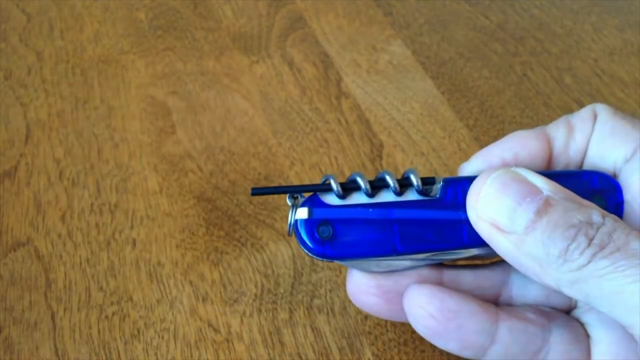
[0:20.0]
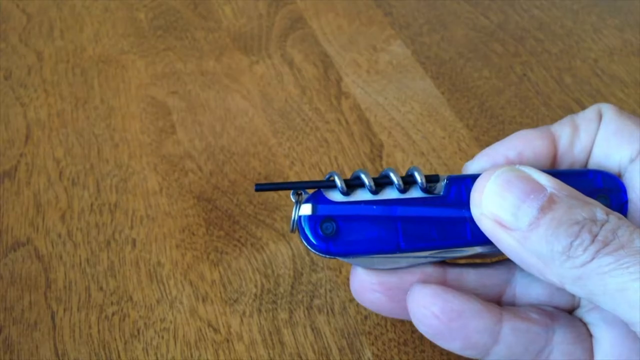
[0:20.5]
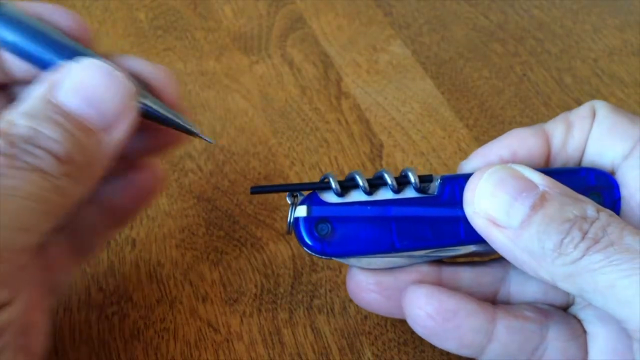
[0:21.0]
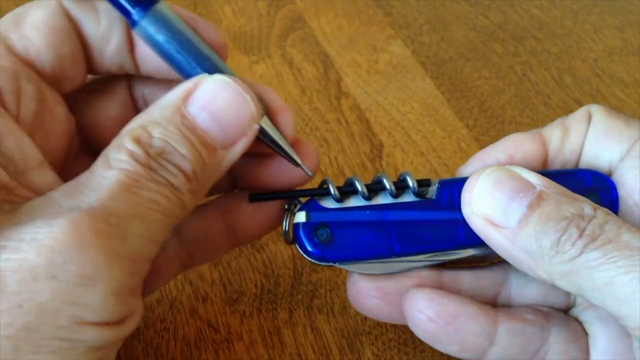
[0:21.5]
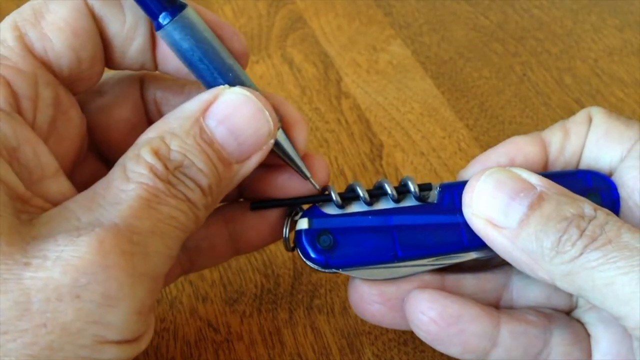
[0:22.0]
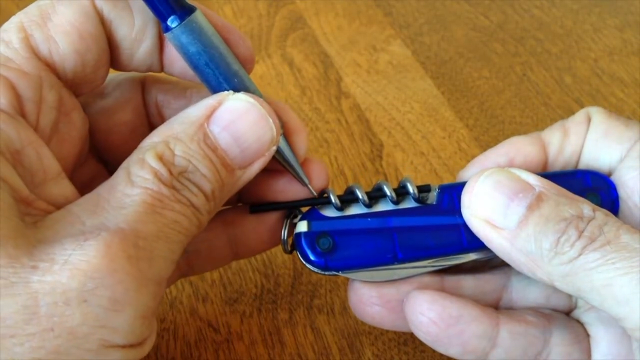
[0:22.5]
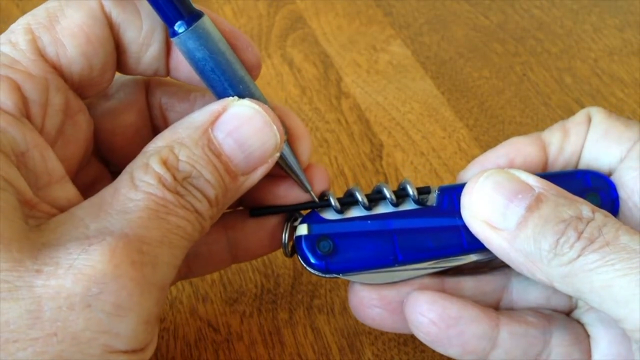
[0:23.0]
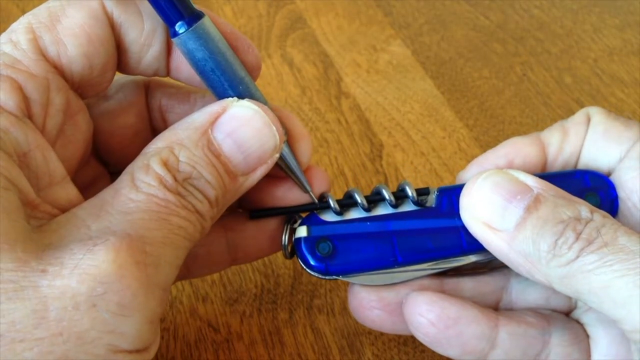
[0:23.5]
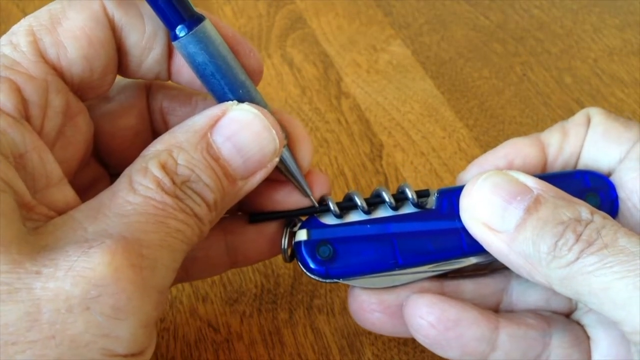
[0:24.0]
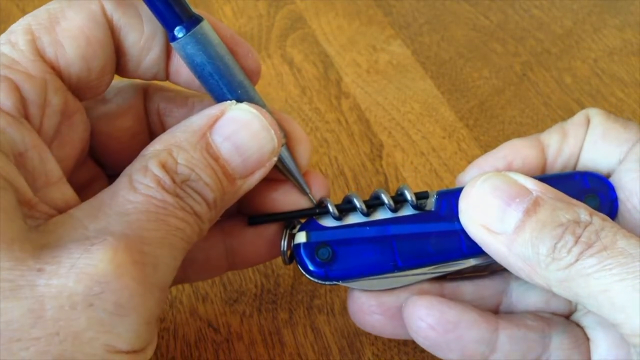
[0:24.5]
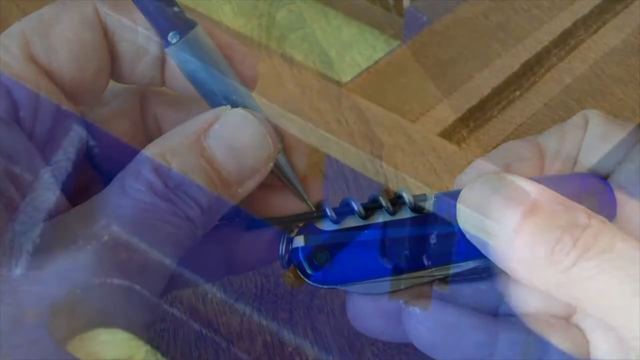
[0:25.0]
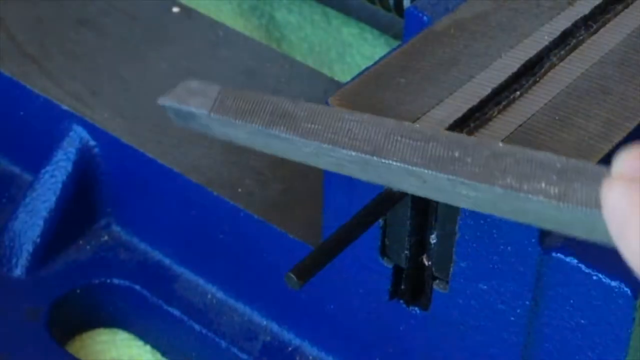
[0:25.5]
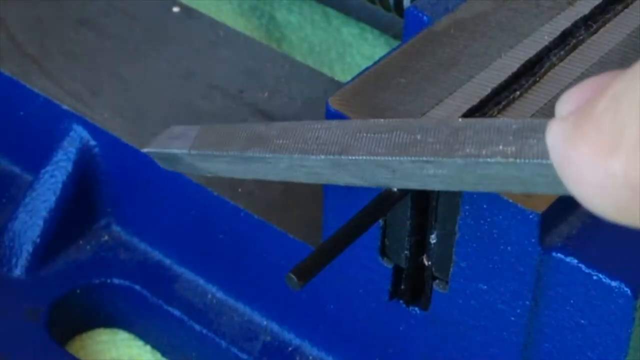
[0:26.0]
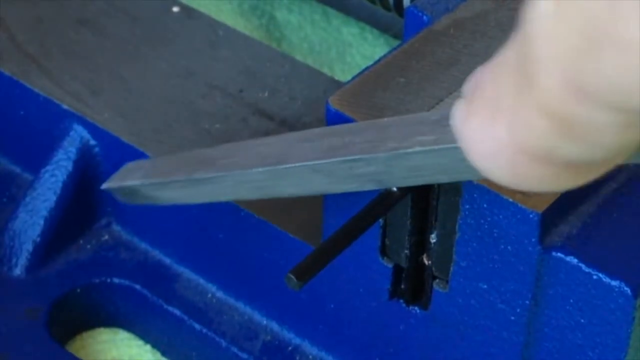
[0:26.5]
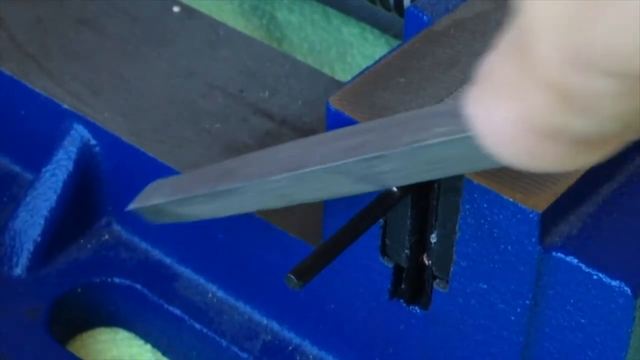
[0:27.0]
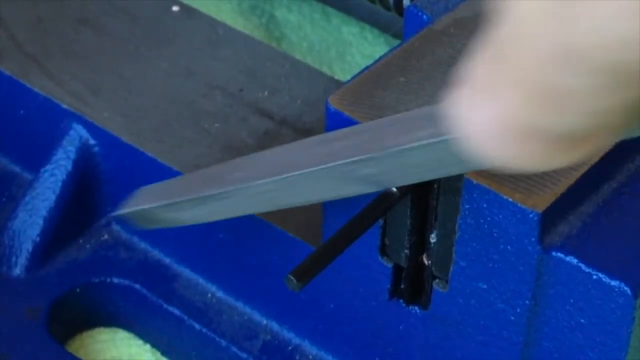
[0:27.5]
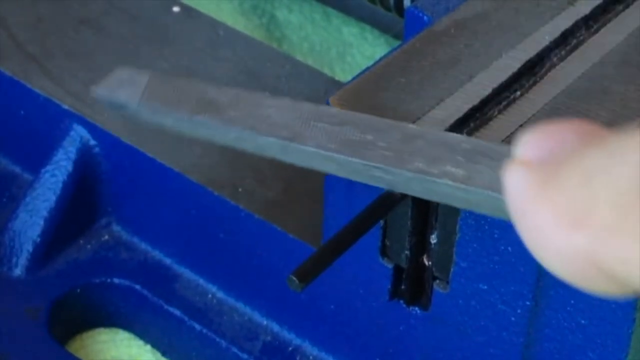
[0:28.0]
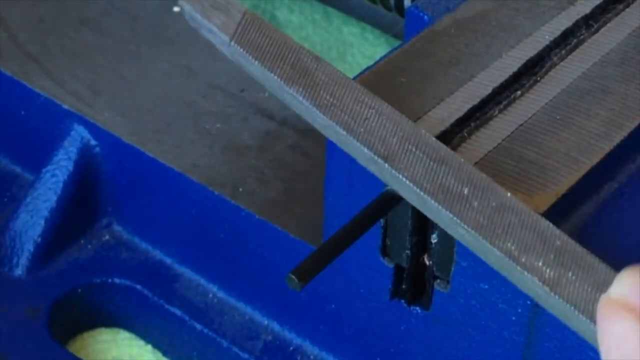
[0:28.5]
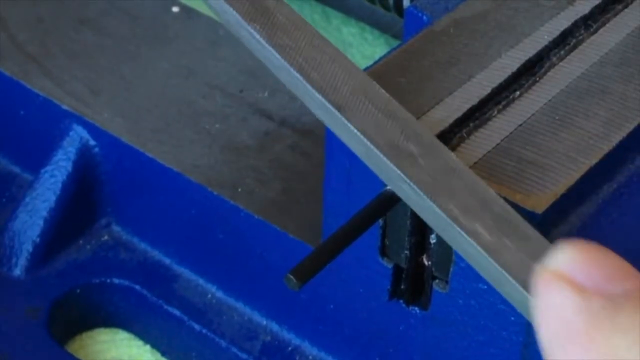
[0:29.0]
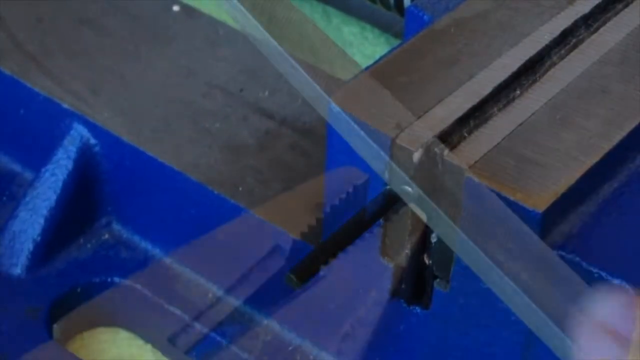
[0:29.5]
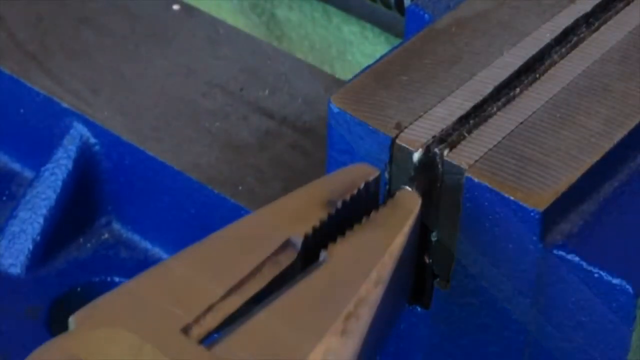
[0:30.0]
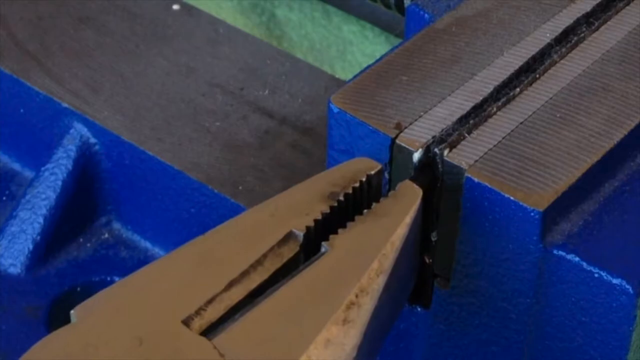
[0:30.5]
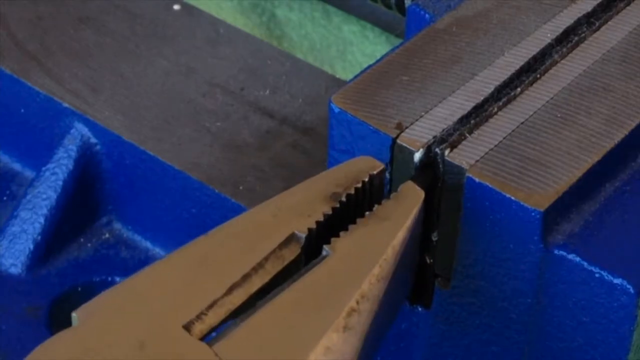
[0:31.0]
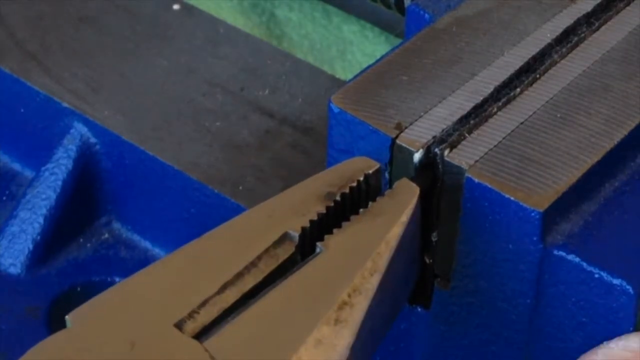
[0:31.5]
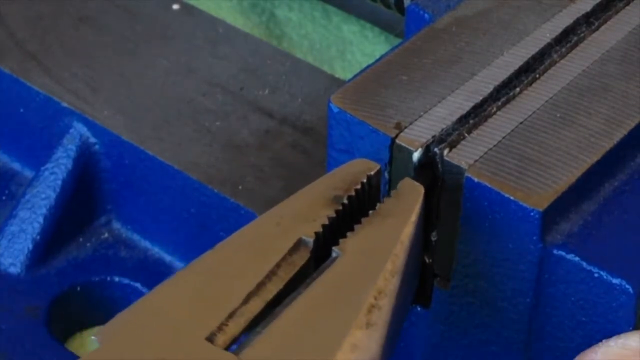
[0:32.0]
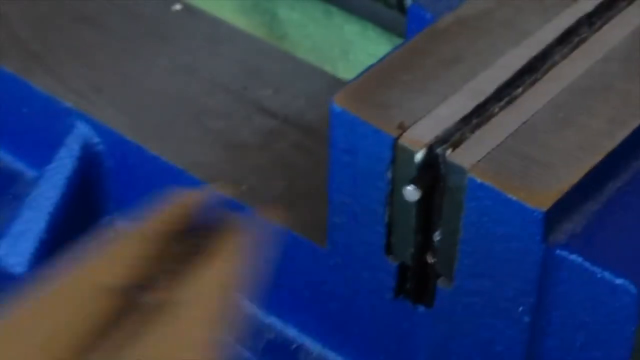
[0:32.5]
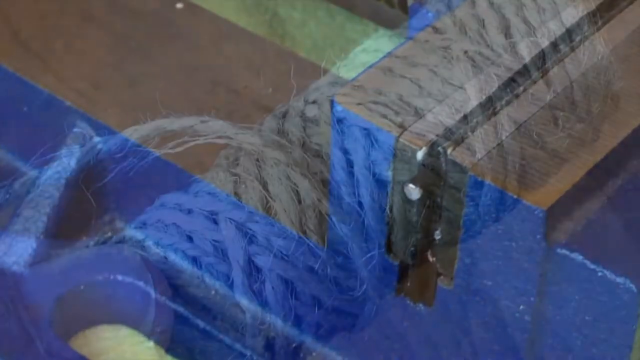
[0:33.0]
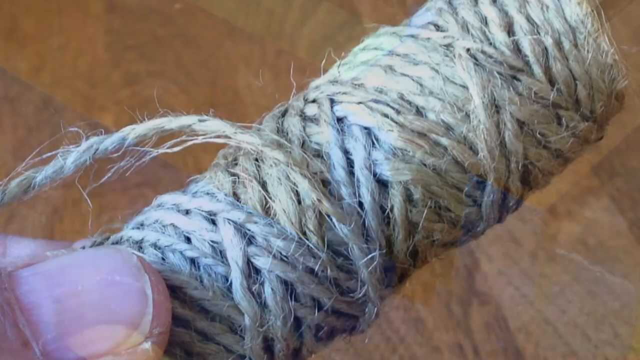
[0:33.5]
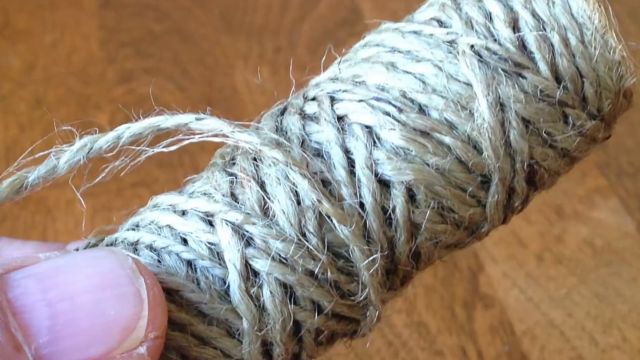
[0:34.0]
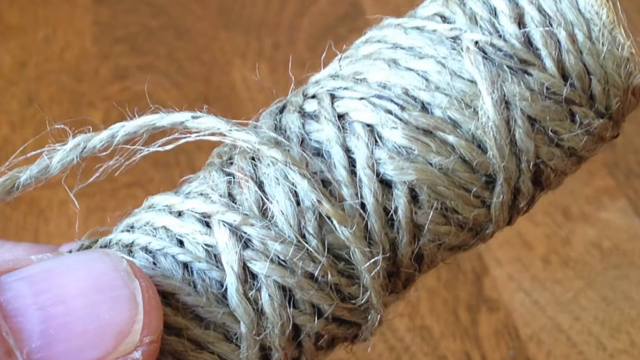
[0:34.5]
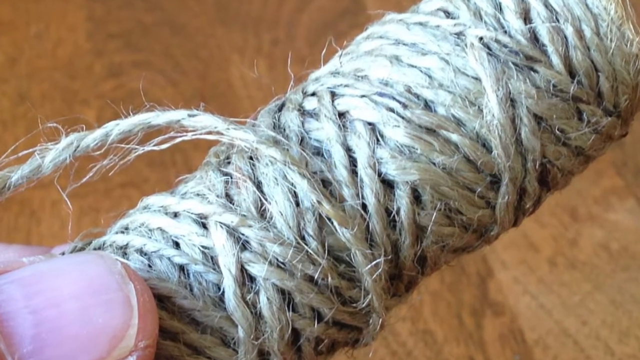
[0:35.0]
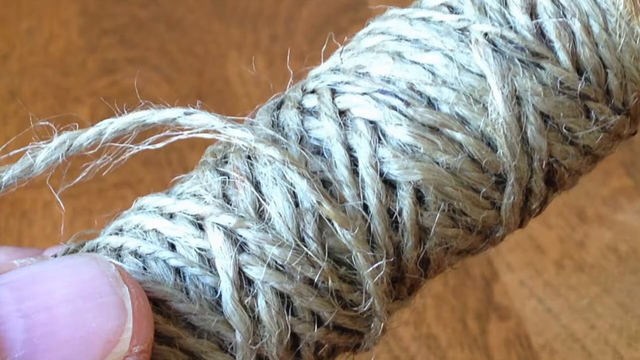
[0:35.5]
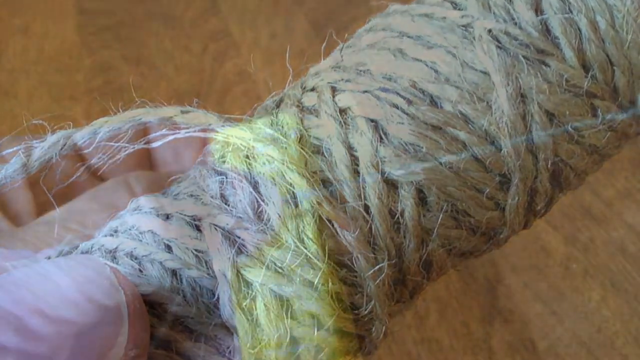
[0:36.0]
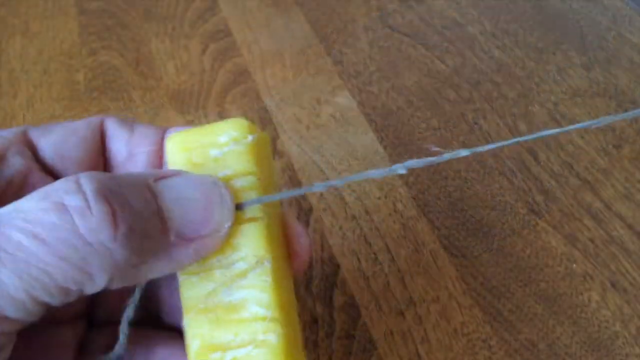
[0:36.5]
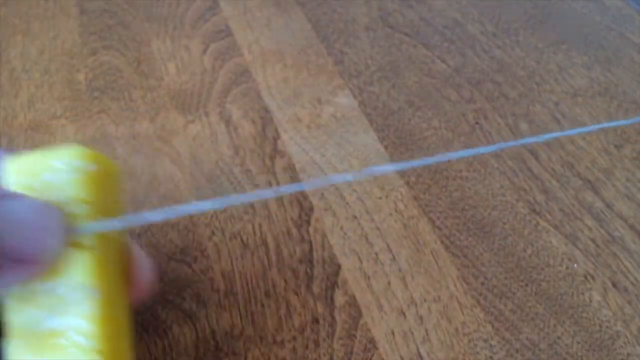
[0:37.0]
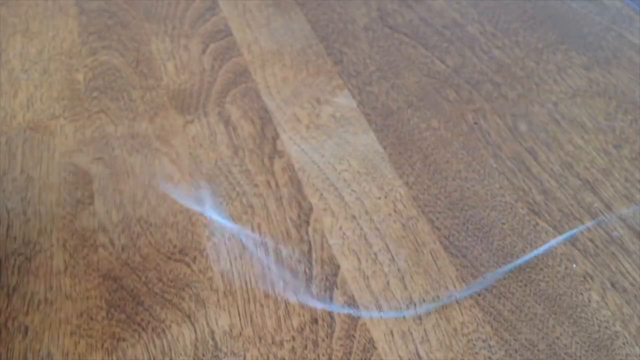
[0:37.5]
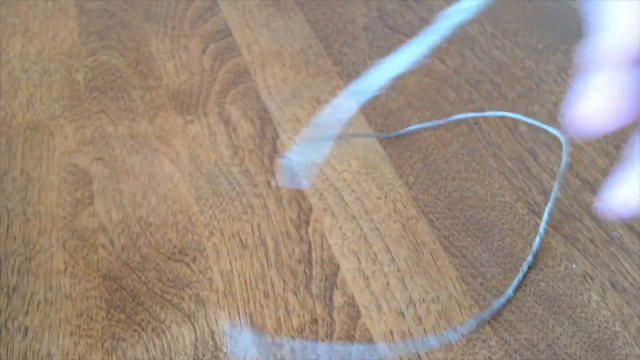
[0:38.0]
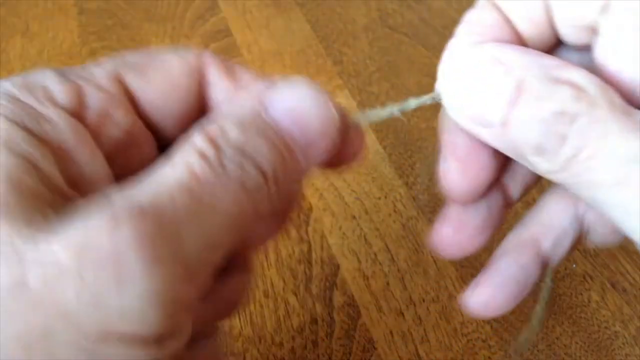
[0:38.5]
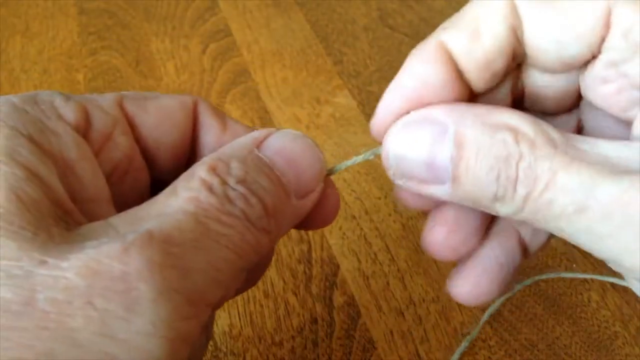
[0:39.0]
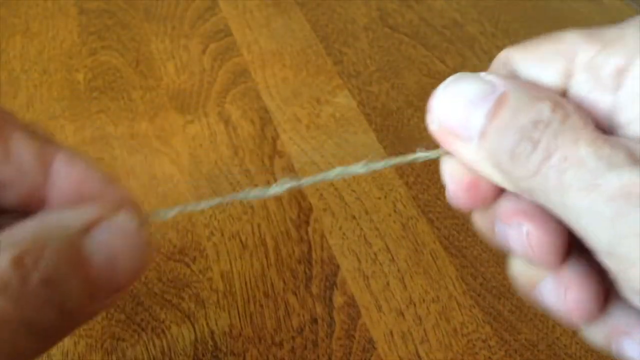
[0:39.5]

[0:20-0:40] The man sets out to cut a piece of the ferrocerium so that it fits the main blue element. He goes to a production hall and cuts the ferrocerium with a triangular metal element so that it matches the blue element as closely as possible. Next he prepares a piece of yarn and apparently makes glue to put on it.